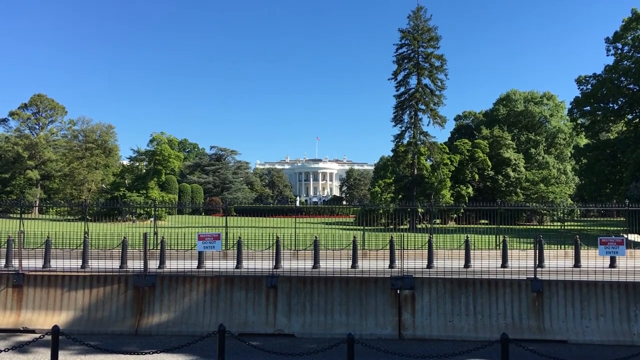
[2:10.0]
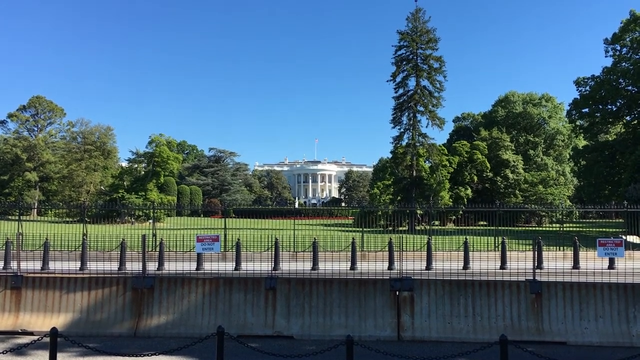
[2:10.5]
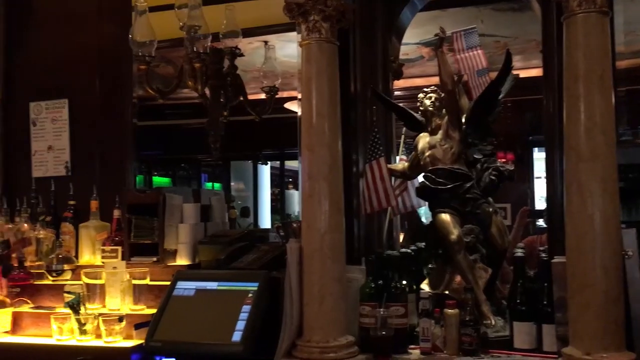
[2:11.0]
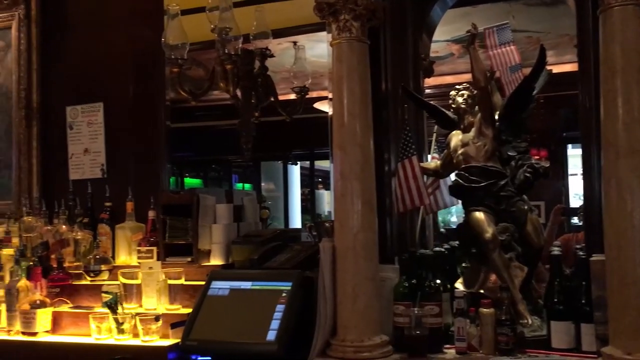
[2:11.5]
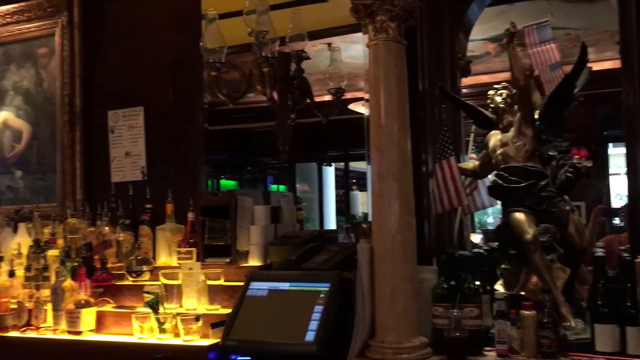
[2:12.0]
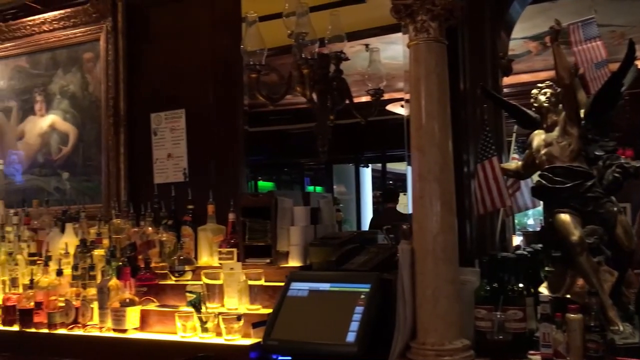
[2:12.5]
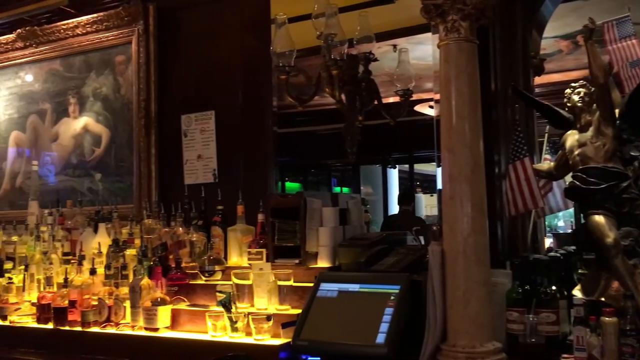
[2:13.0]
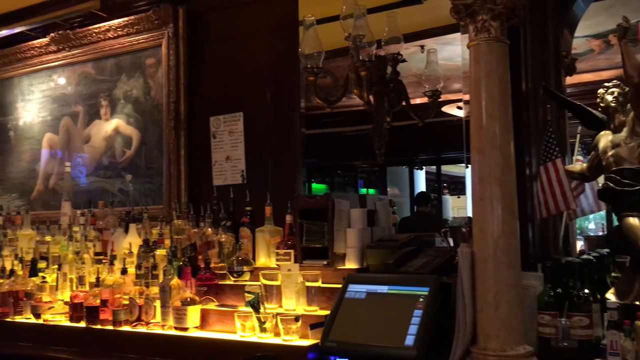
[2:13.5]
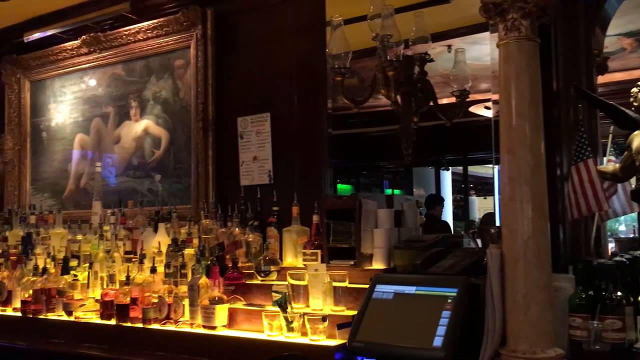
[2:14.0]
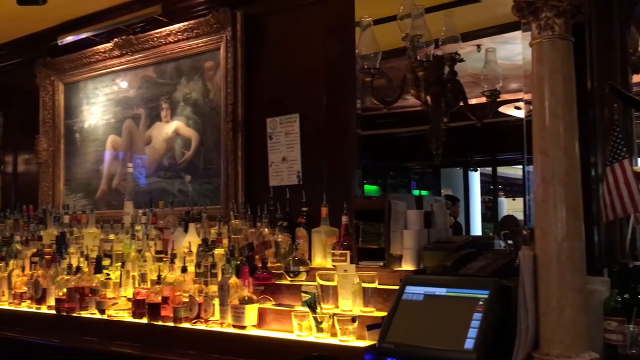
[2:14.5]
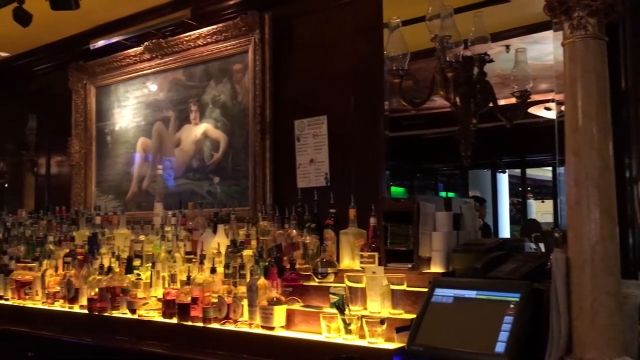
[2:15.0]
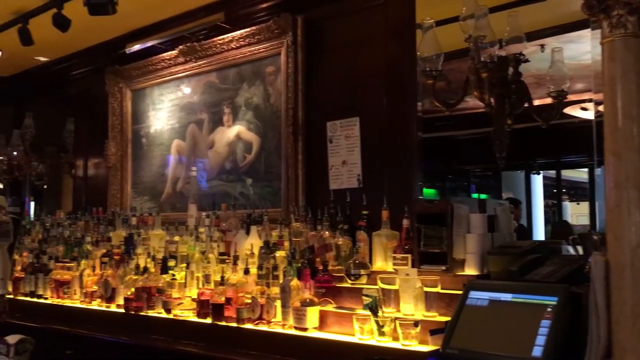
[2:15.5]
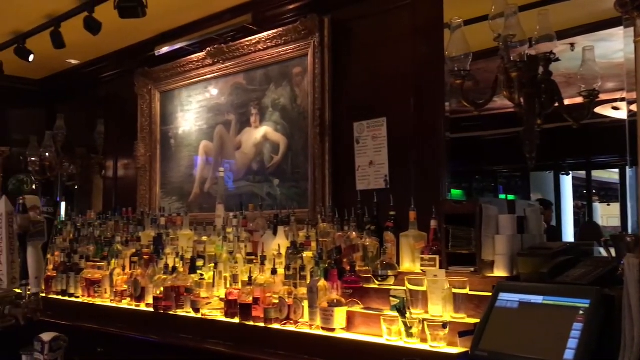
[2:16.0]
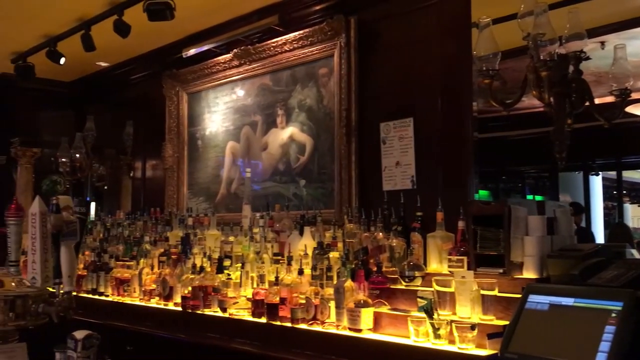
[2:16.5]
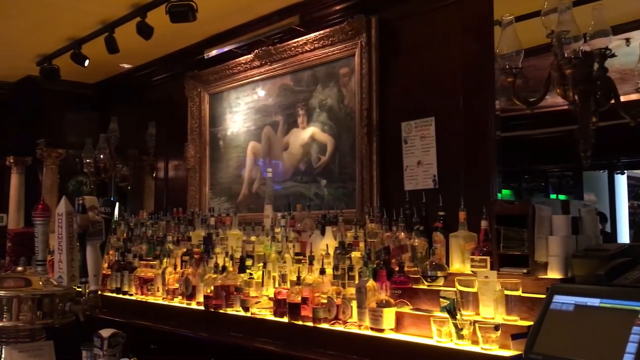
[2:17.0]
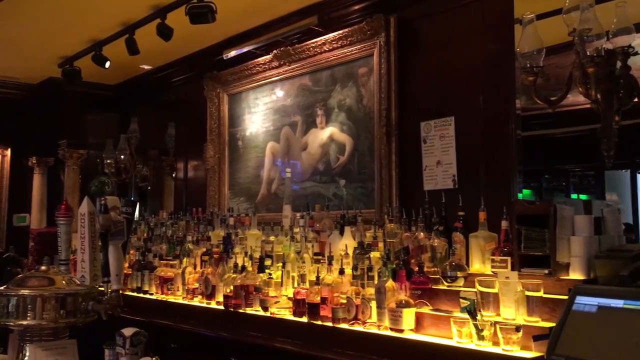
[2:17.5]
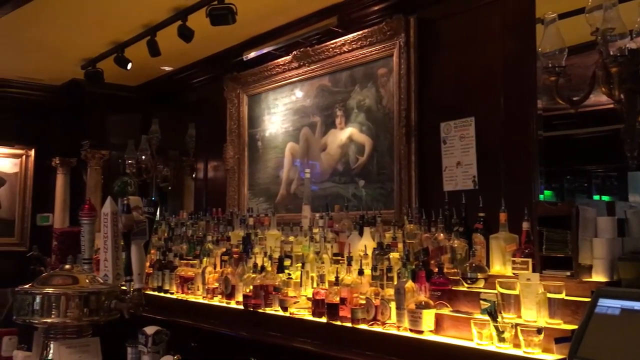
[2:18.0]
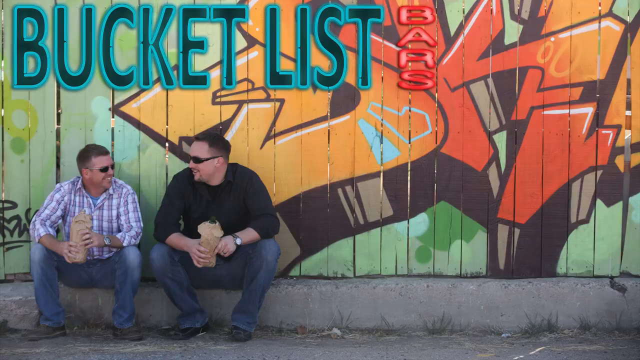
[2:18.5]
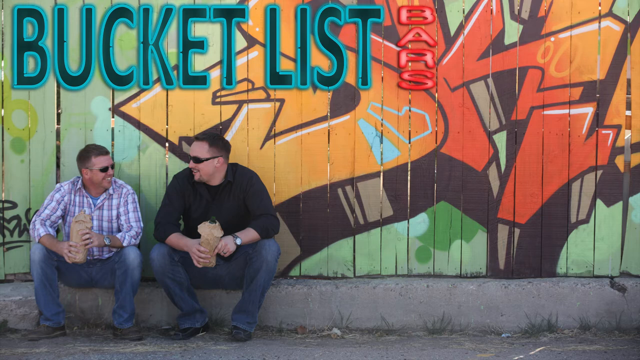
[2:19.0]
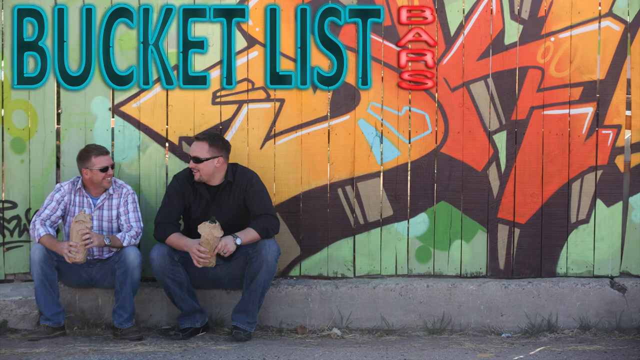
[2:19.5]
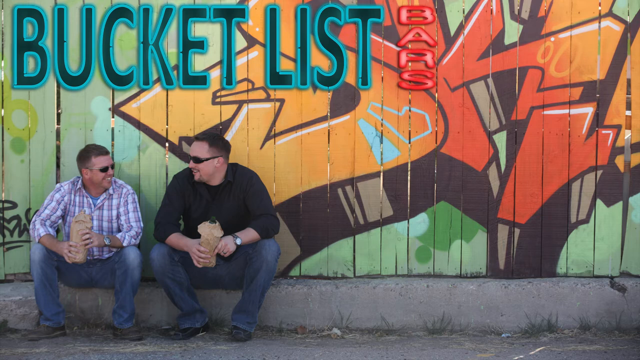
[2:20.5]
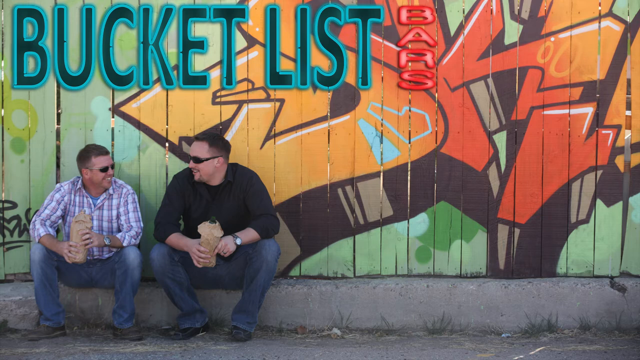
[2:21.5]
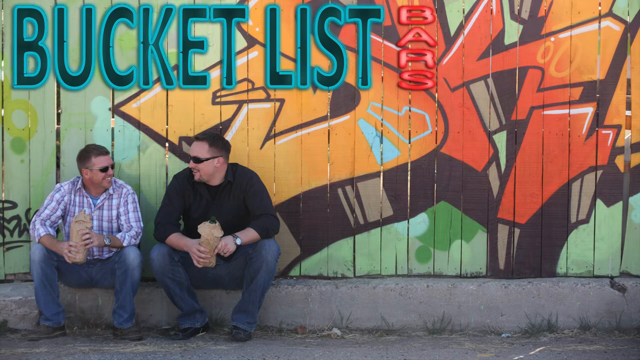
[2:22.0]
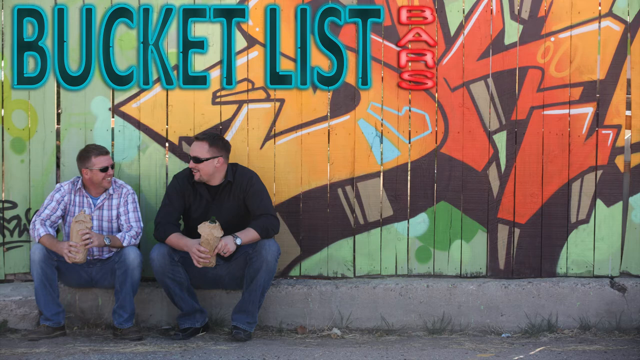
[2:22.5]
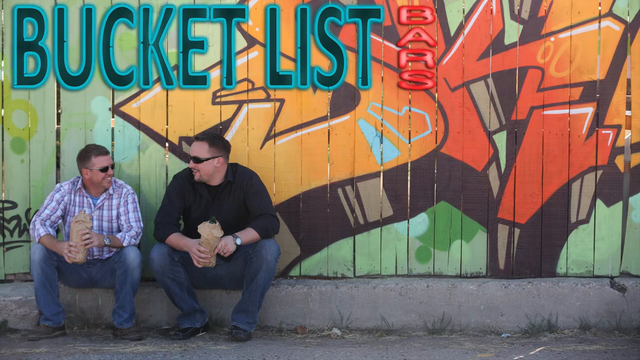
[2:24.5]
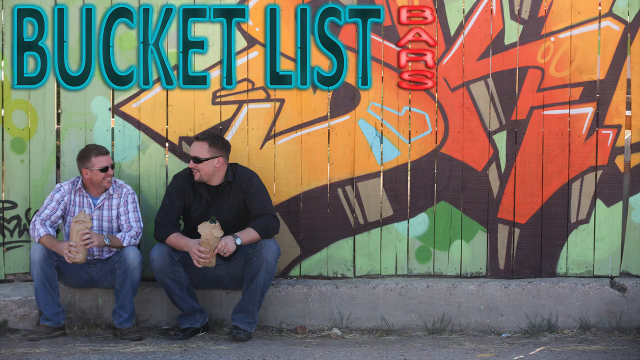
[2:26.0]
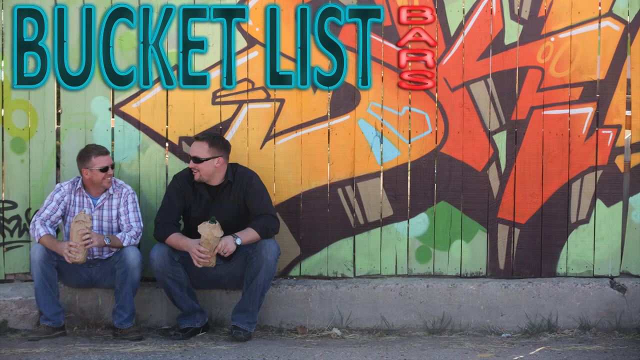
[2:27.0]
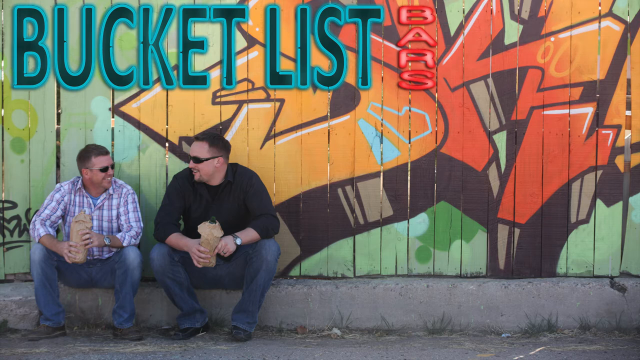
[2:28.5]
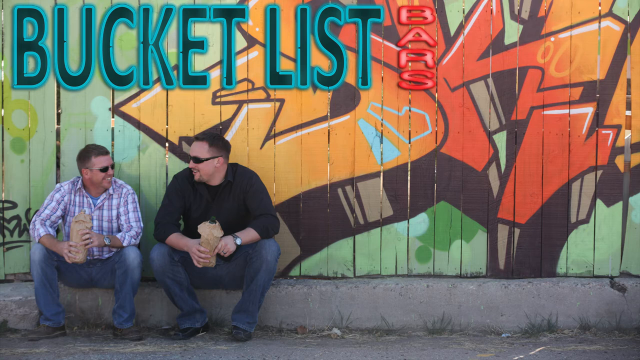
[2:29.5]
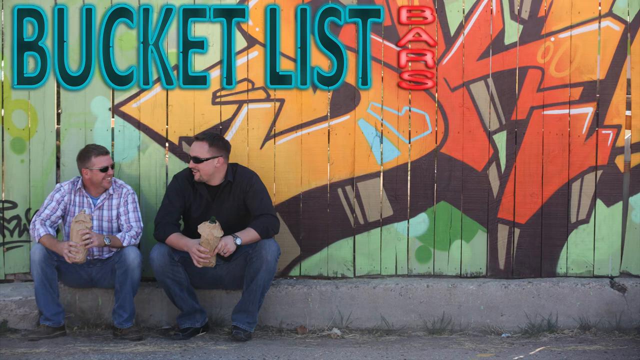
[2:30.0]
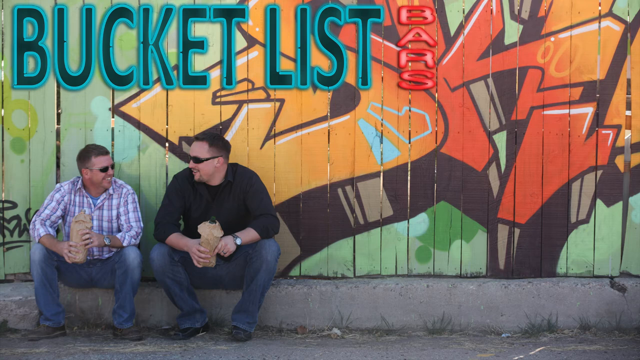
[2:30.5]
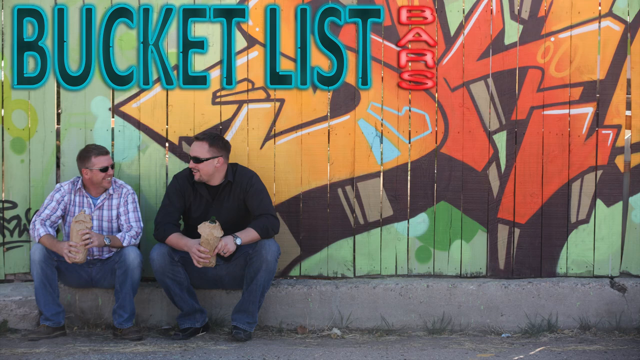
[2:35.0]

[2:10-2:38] After the White House, the video switches back to the Old Ebbet Grill with a last lingering shot of the painting, possibly a famous one. The bottles are shown, and the bar area is very dimly lit.